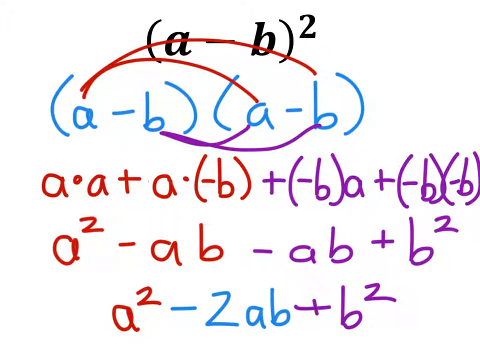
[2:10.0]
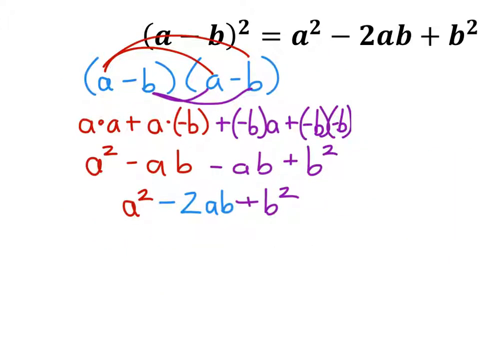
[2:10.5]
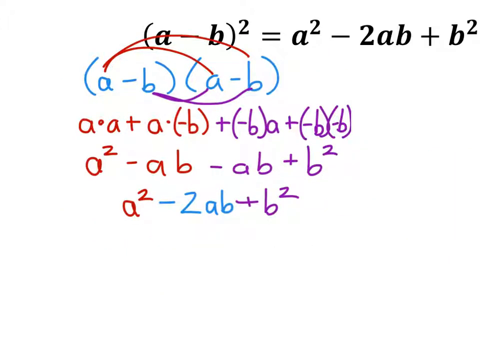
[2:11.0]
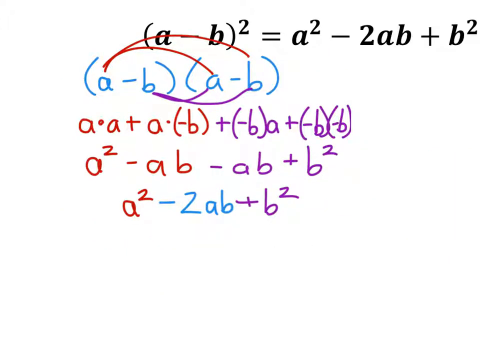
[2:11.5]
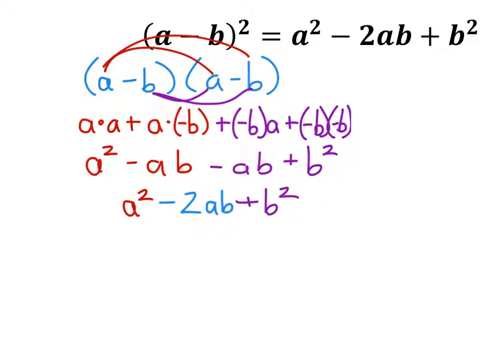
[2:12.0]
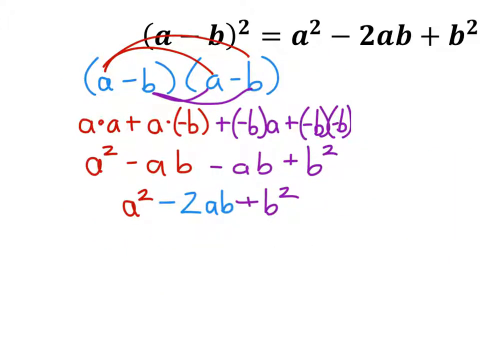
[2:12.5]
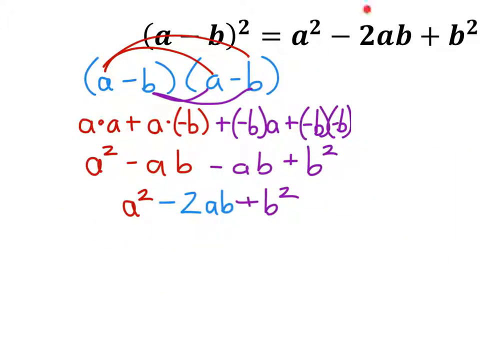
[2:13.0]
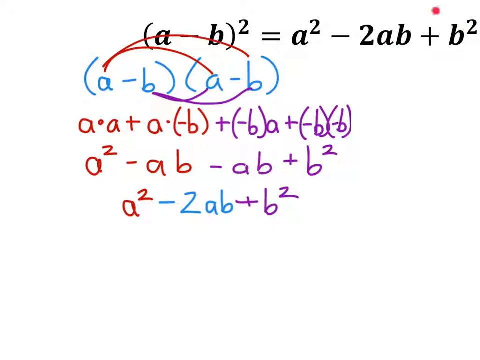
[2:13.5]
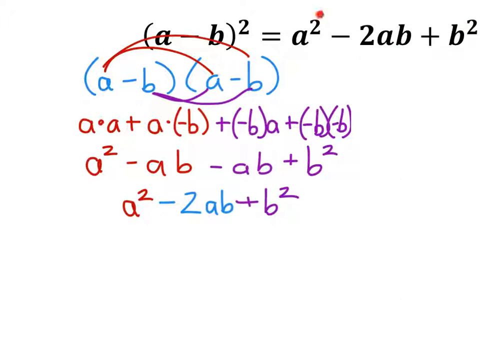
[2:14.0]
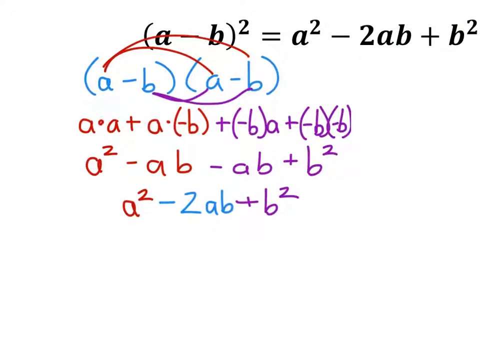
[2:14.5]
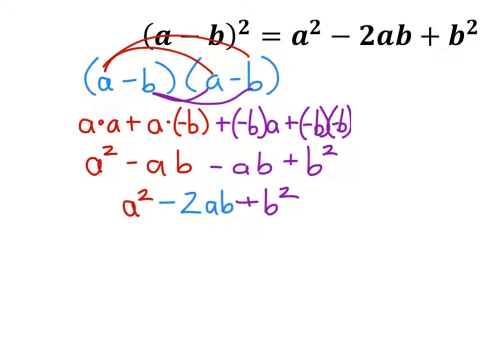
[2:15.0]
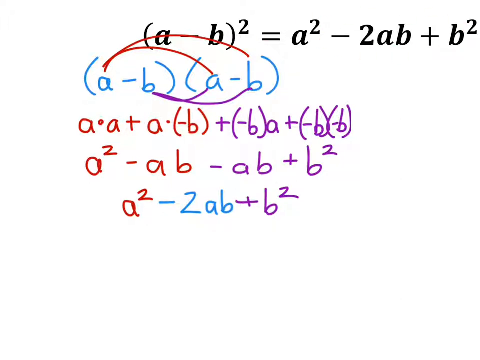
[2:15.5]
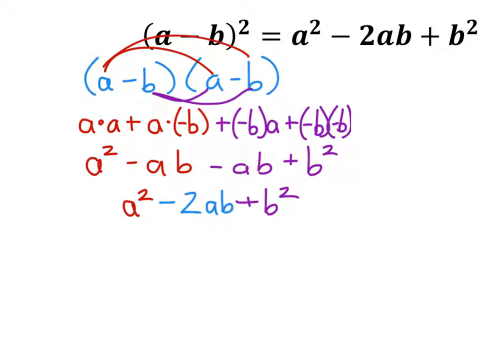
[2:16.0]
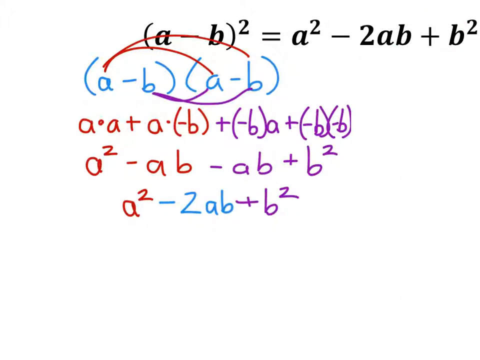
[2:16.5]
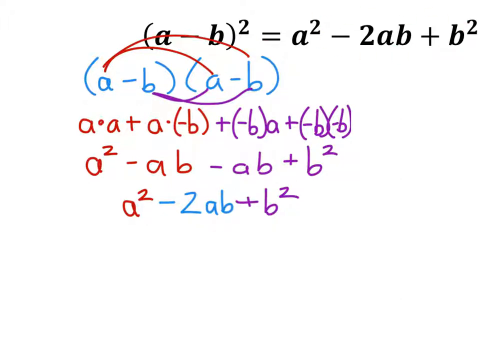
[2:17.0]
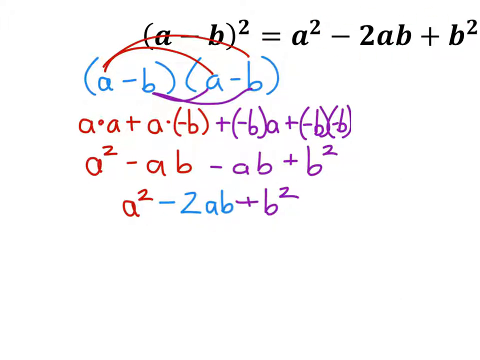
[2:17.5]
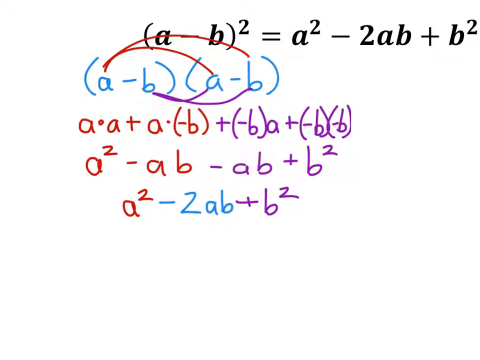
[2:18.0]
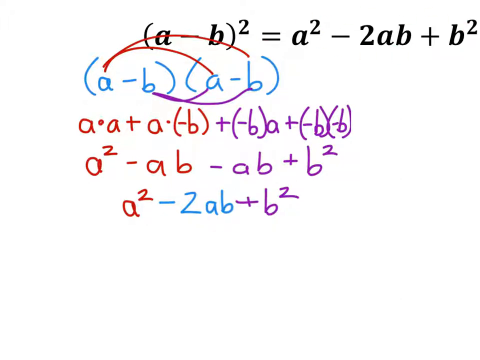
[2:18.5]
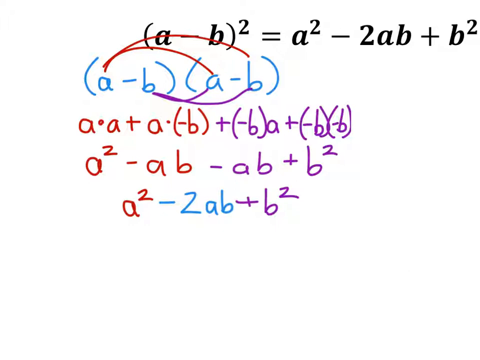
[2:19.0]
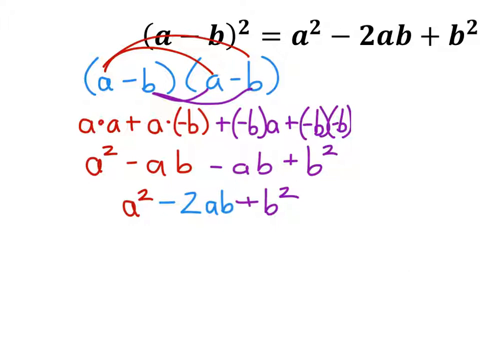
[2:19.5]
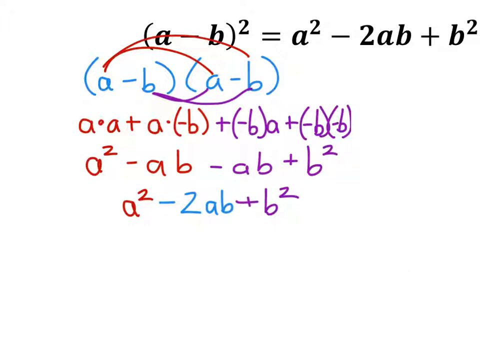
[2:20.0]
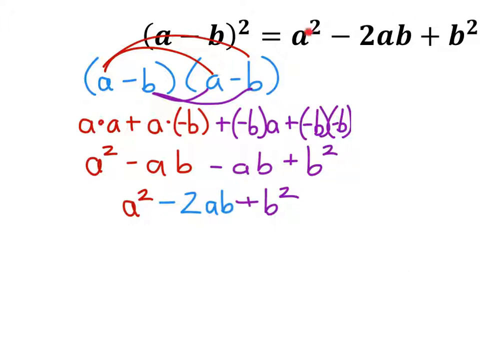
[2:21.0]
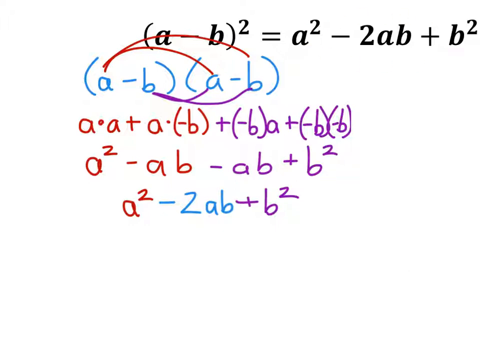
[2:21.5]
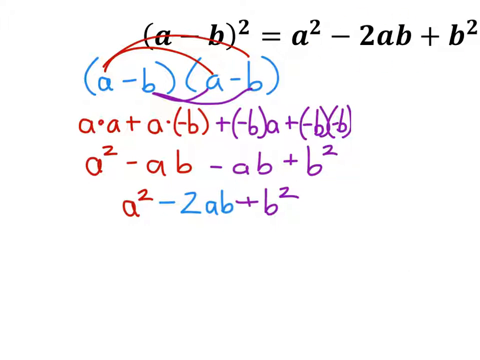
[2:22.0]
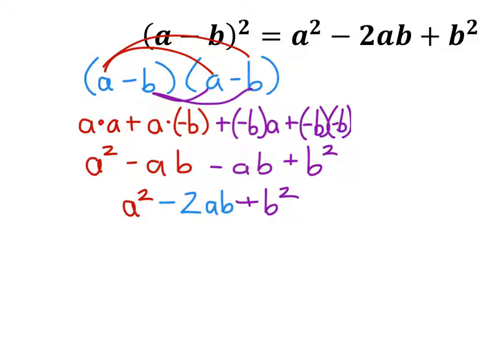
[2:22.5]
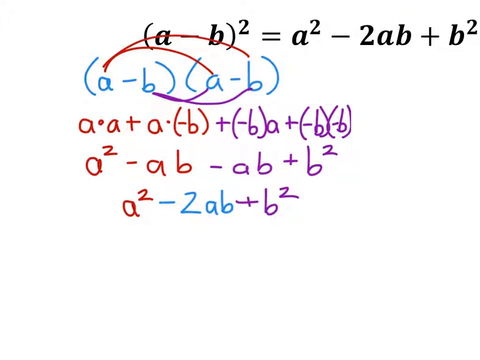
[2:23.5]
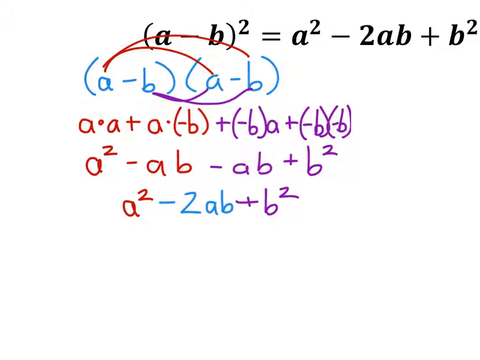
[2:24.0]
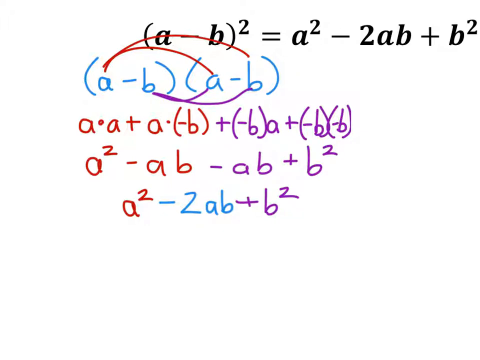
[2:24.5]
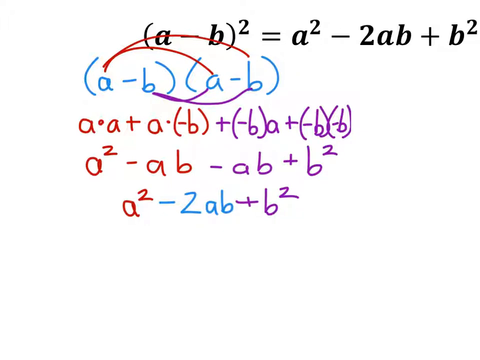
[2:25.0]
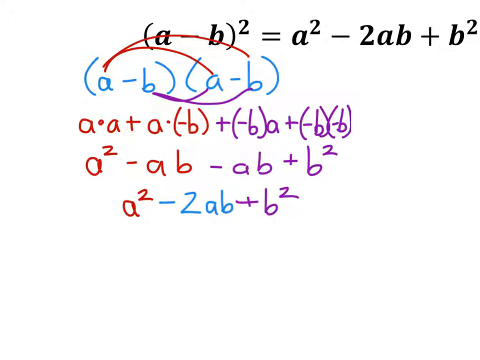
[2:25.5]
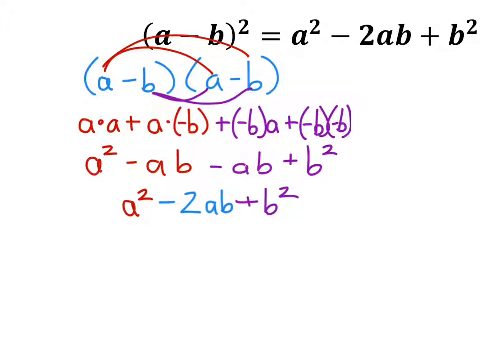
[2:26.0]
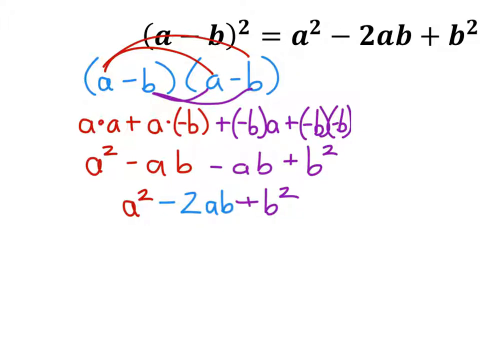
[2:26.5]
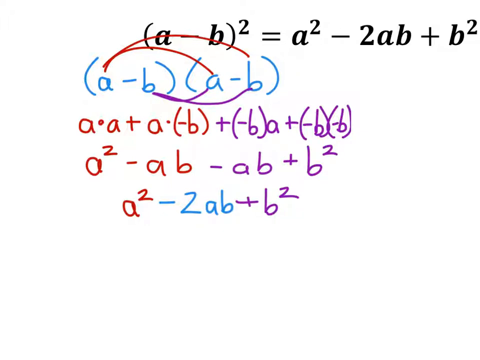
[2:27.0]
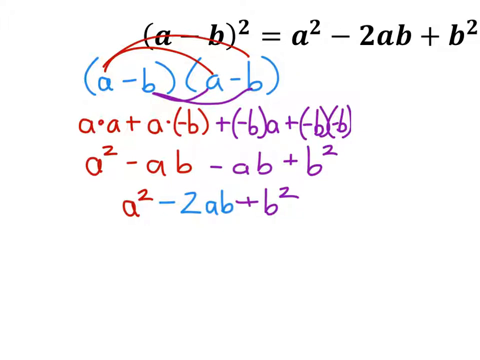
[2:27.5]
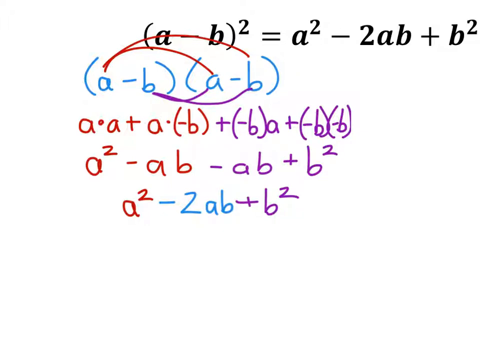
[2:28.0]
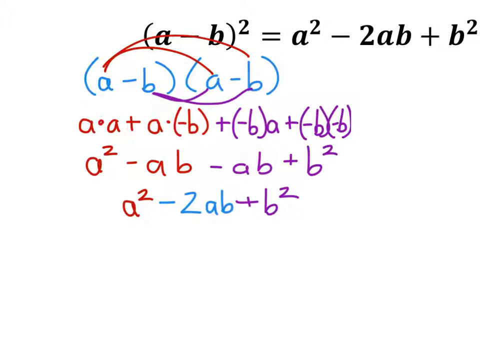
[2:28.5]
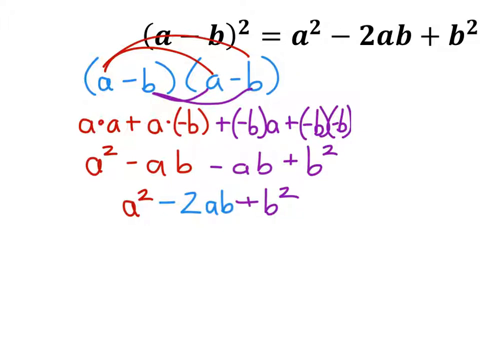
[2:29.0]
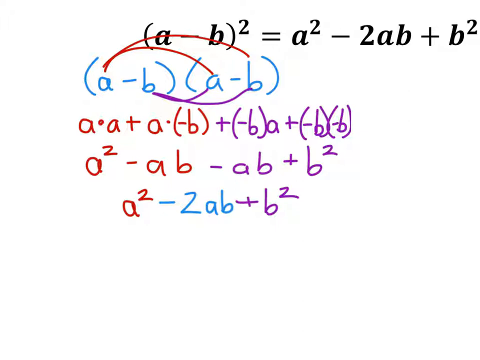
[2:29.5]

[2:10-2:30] On a white background, (A − B)² is written in black, and (A − B)(A − B) in blue. There are two red lines sending A into A and A into B, and under them two purple lines sending B into A and B into B. Under this is A × A + A × (−B) + (−B) × A + (−B)(−B), in purple. Next is A² − A × B in red, followed in purple by −AB + B². Below that is A² − 2 × A × B + B². The page then suddenly zooms out as the instructor points out A² − 2 × A × B + B².